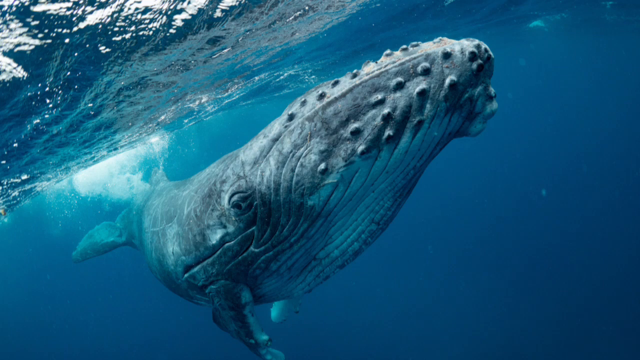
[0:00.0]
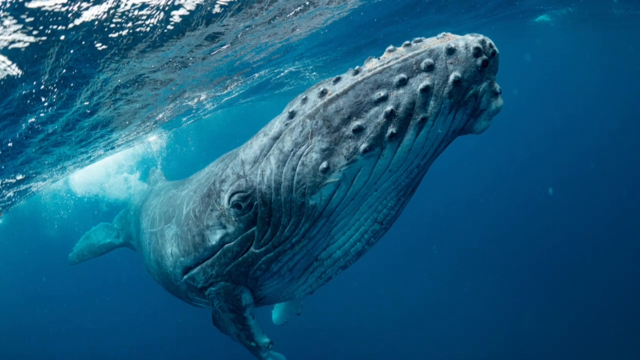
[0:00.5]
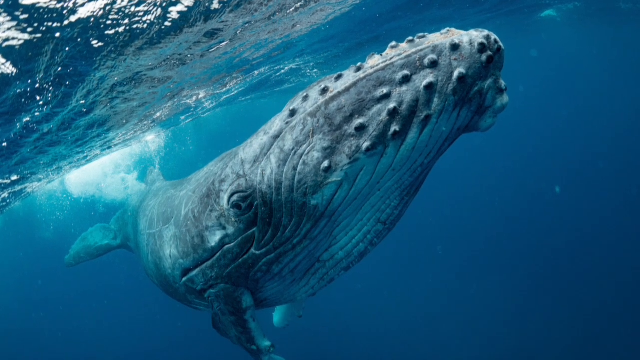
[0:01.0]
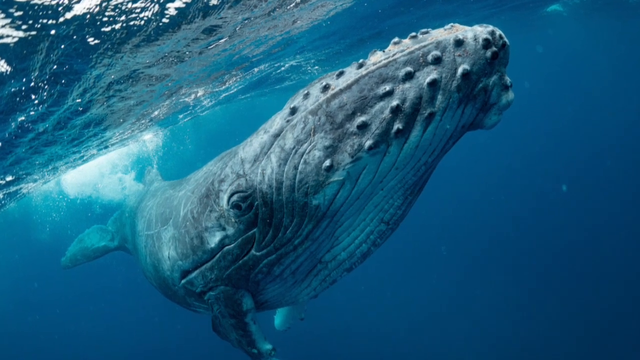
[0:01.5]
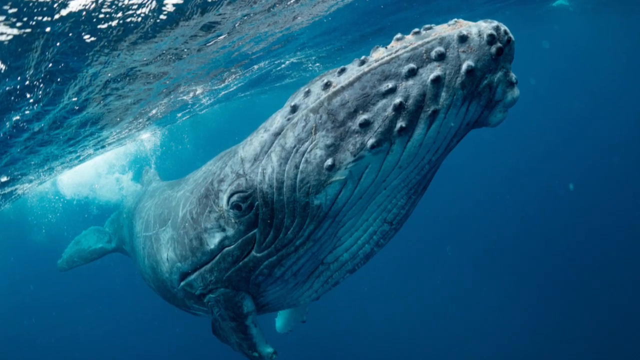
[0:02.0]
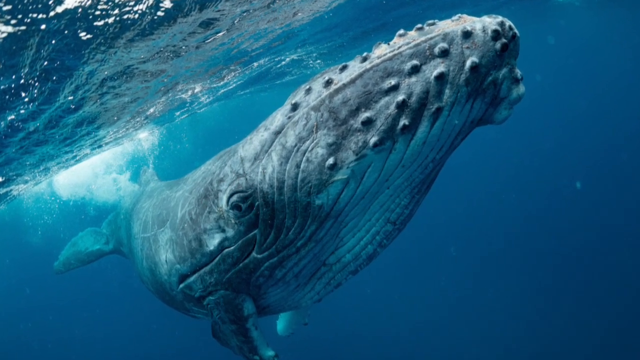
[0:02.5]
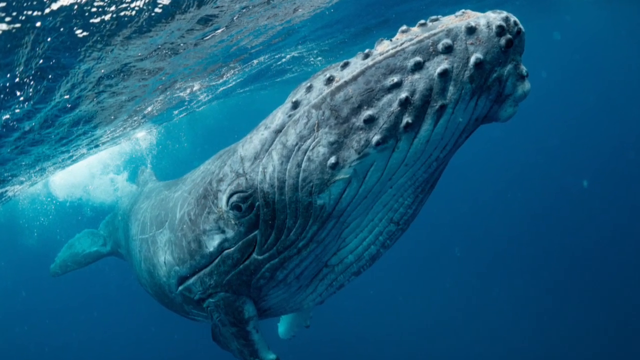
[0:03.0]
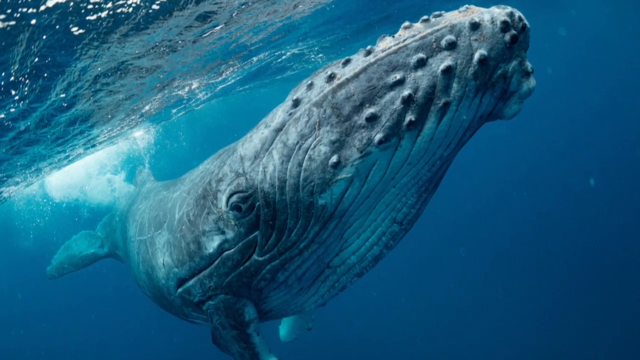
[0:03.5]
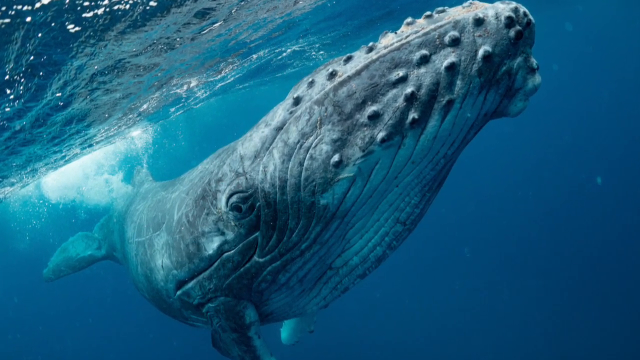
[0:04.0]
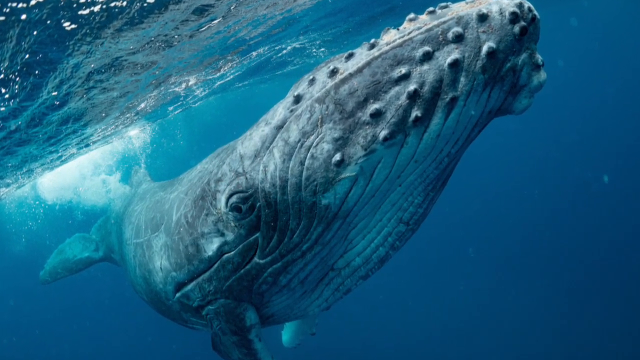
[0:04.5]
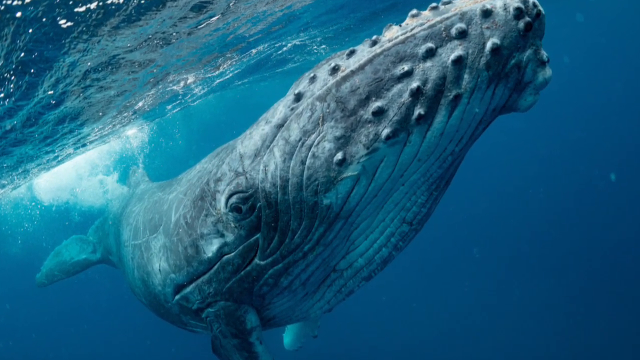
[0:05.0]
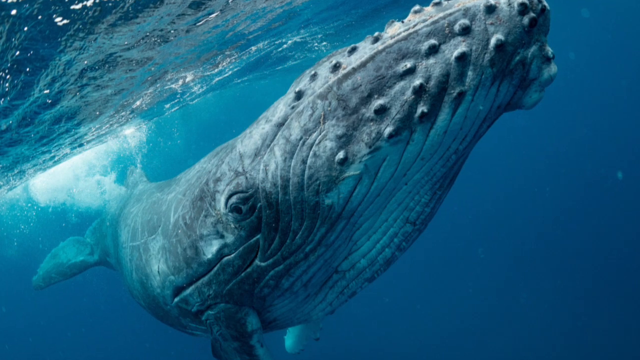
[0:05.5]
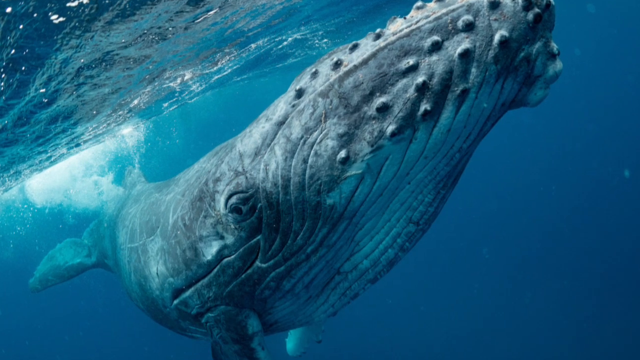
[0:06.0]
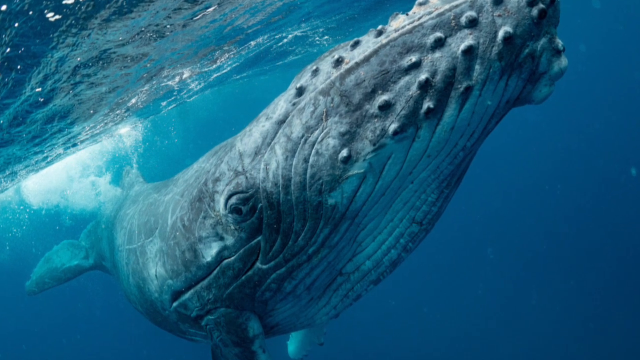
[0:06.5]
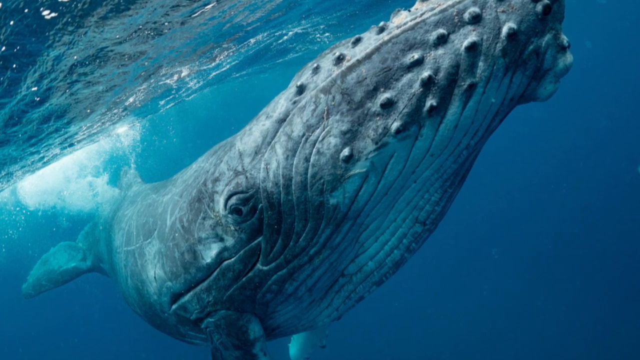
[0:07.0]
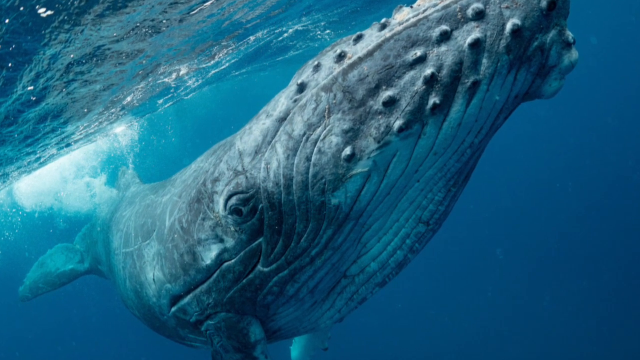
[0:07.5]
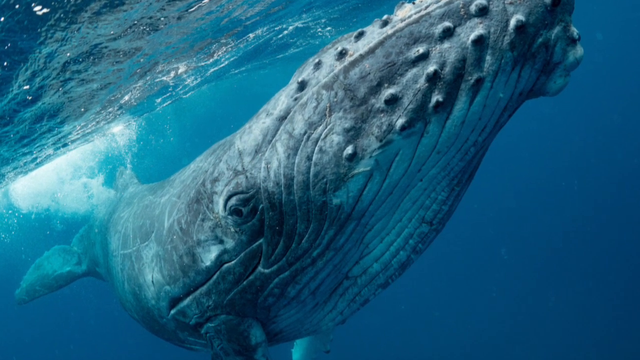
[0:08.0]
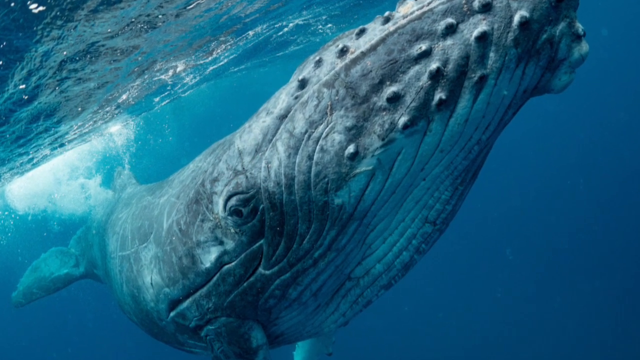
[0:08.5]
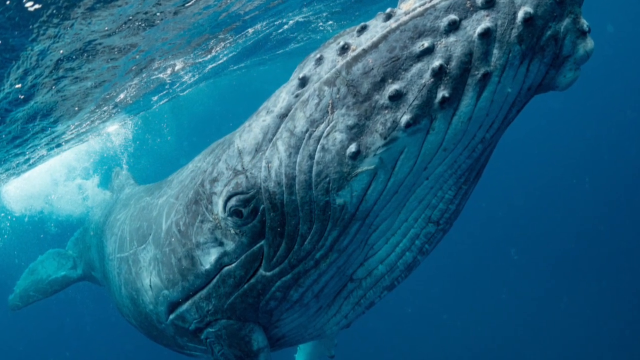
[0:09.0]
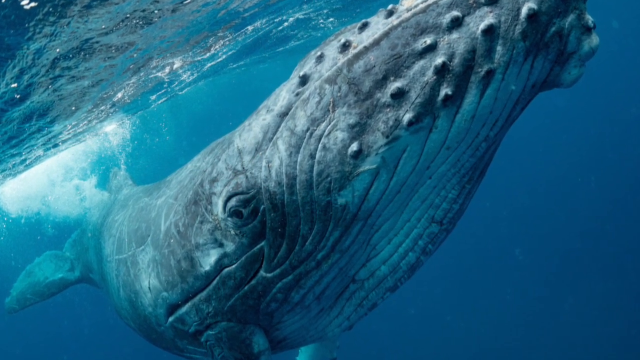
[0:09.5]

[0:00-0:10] A photo of a very large whale underwater slowly approaches the camera, rotating slightly counterclockwise. The whale is in the center of the photograph. In the upper left corner the surface of the water is visible. In the left part of the frame, in the center, there is white foam near the whale's tail. The lower right corner of the frame shows only water, an intense blue with some small spots of lighter blue. The image is of high quality.